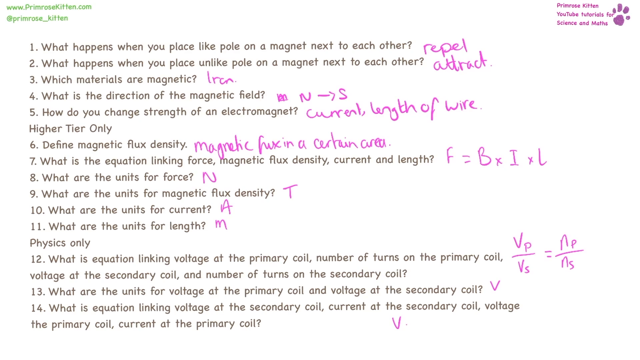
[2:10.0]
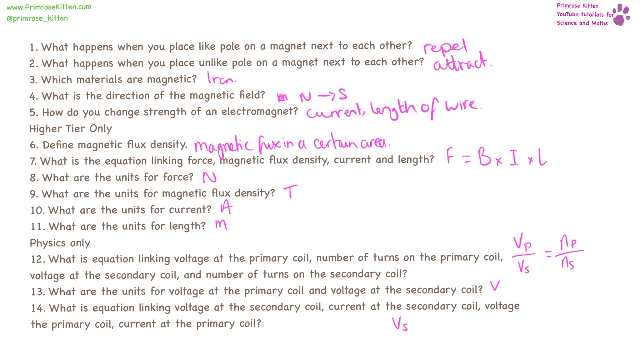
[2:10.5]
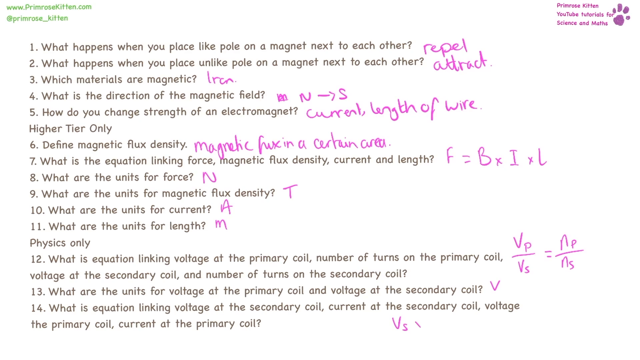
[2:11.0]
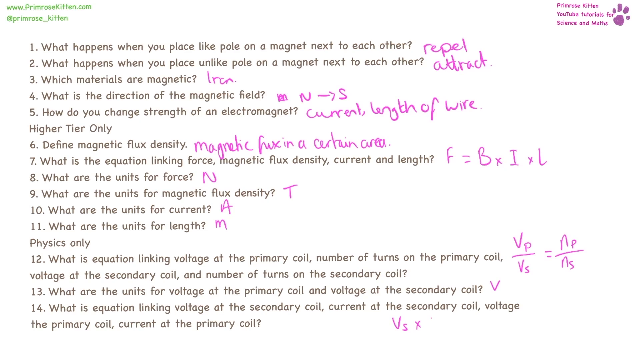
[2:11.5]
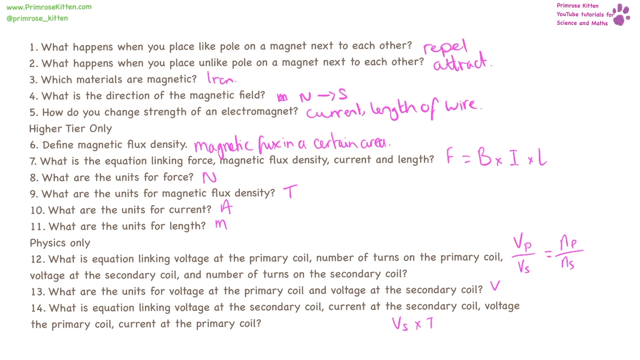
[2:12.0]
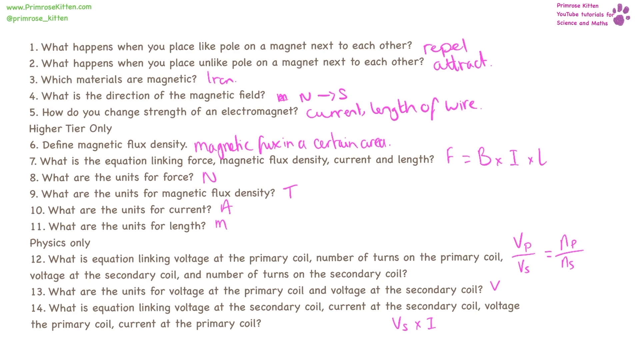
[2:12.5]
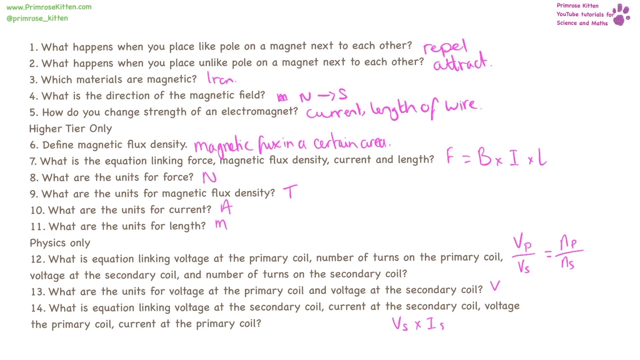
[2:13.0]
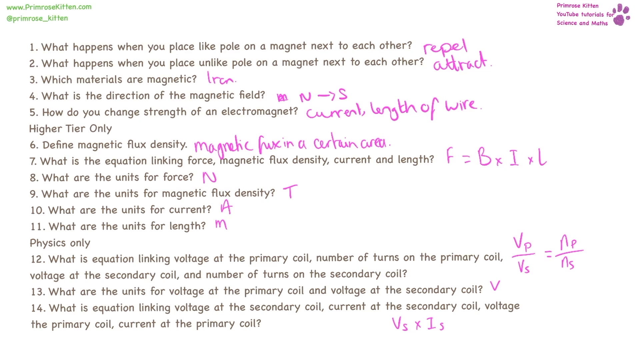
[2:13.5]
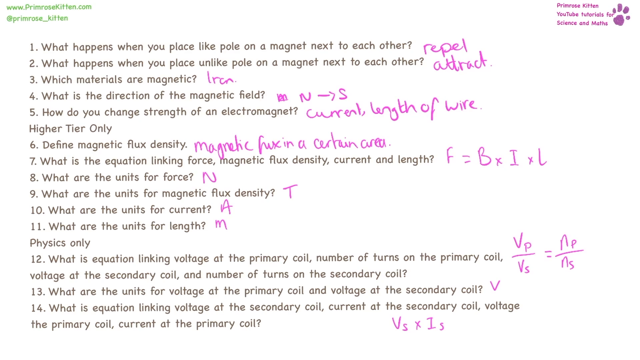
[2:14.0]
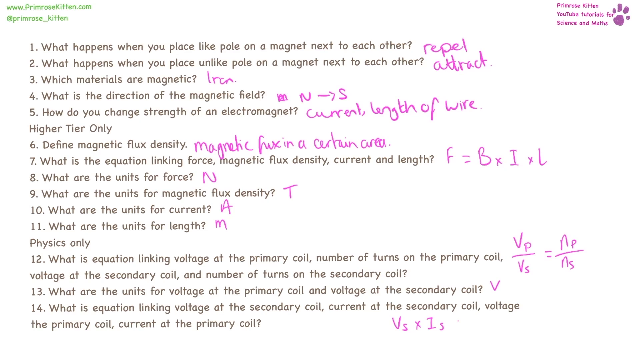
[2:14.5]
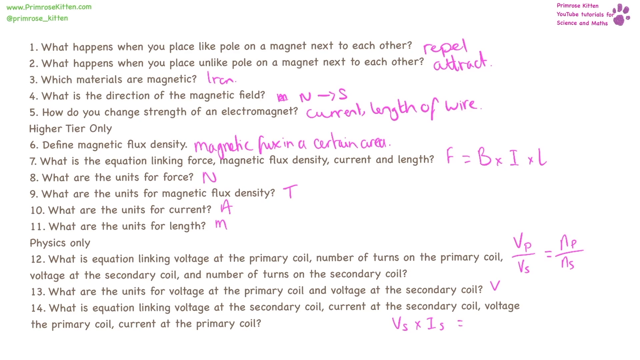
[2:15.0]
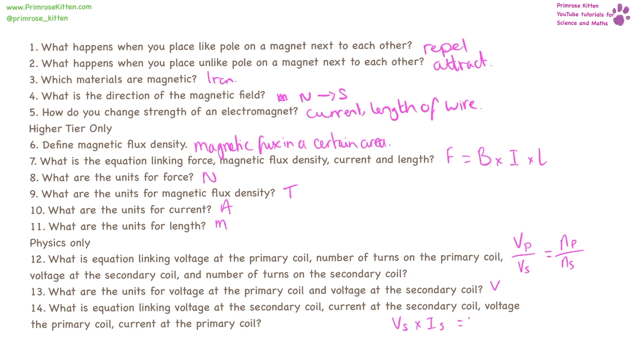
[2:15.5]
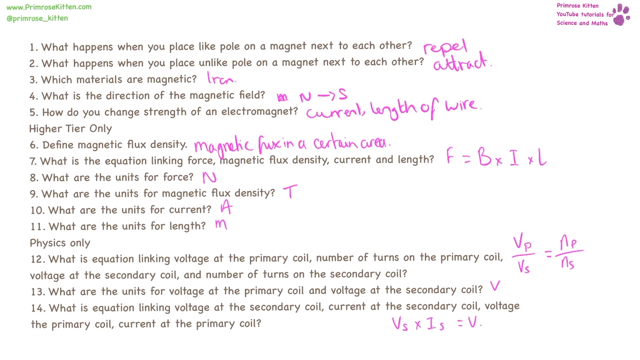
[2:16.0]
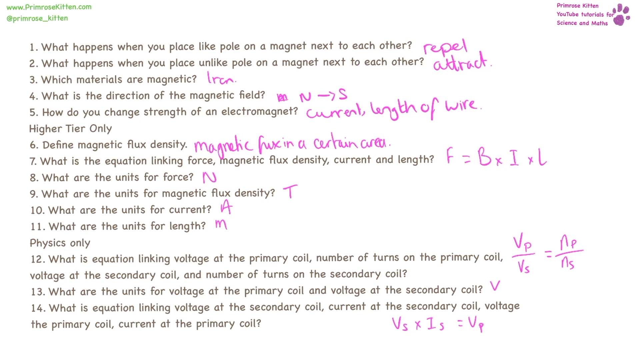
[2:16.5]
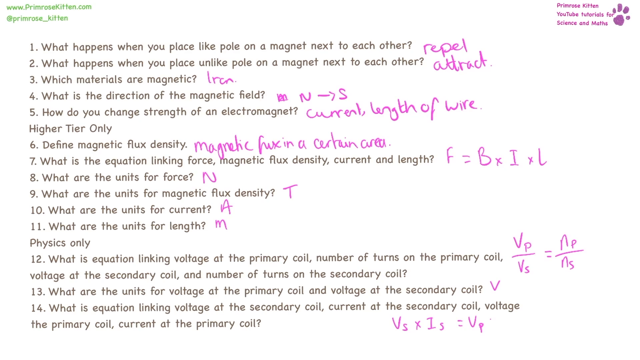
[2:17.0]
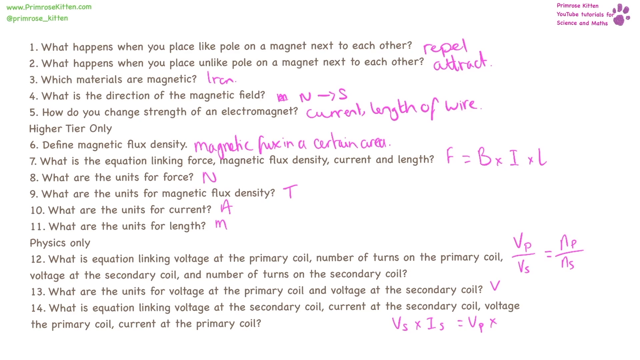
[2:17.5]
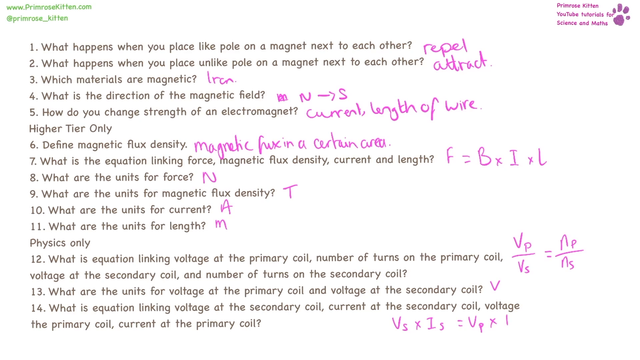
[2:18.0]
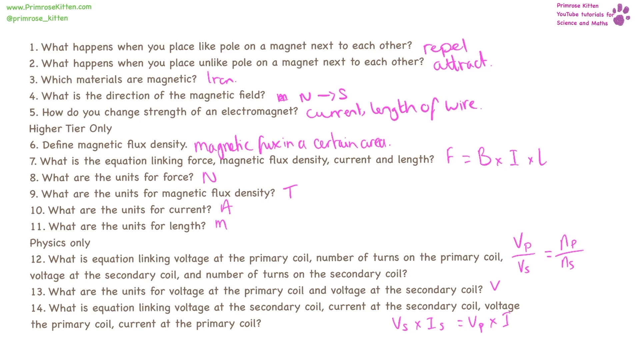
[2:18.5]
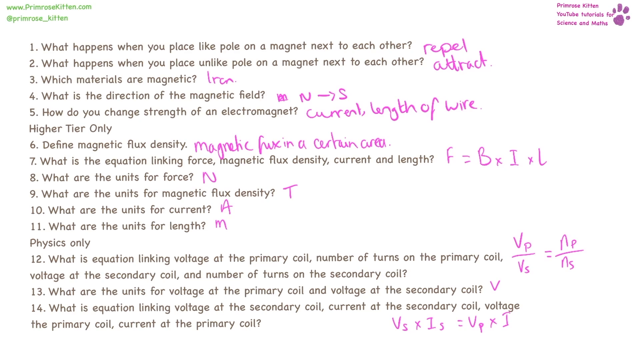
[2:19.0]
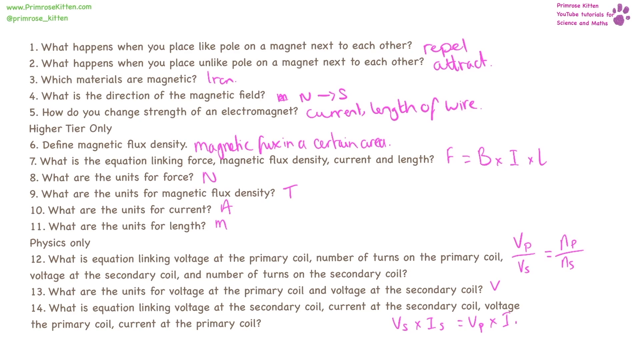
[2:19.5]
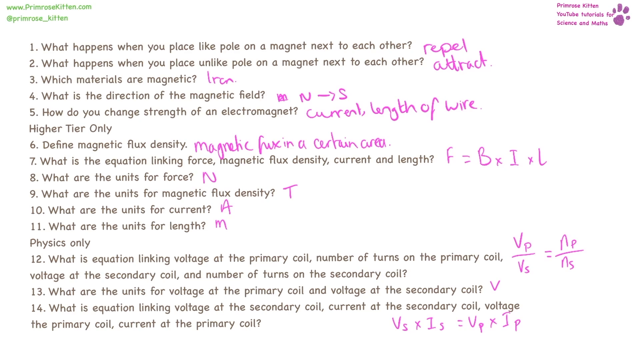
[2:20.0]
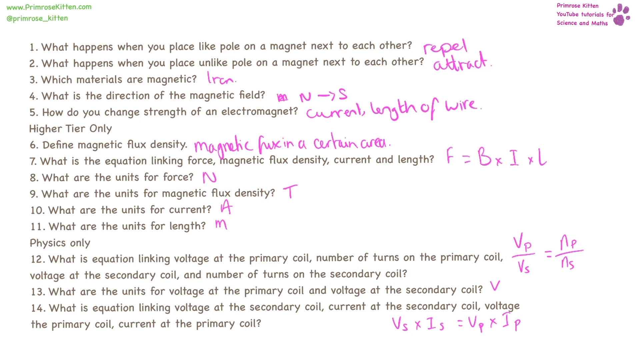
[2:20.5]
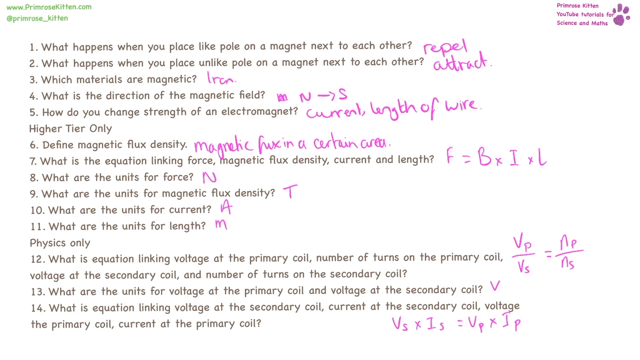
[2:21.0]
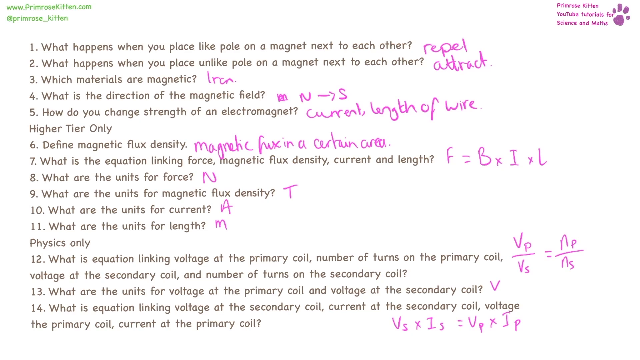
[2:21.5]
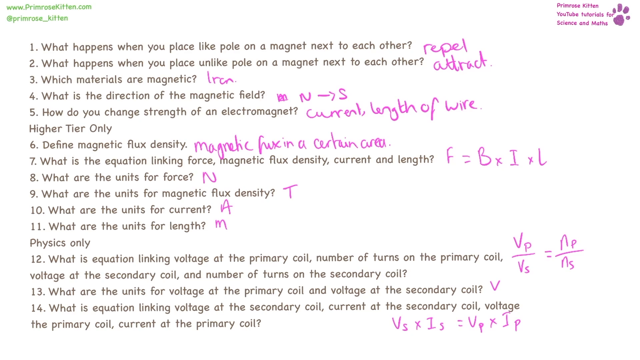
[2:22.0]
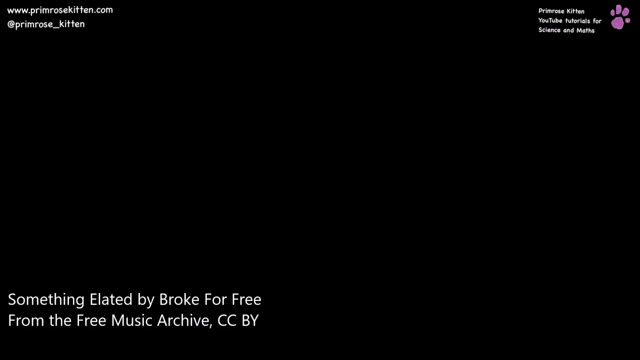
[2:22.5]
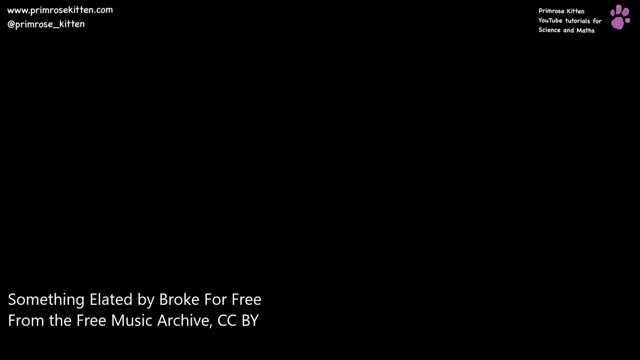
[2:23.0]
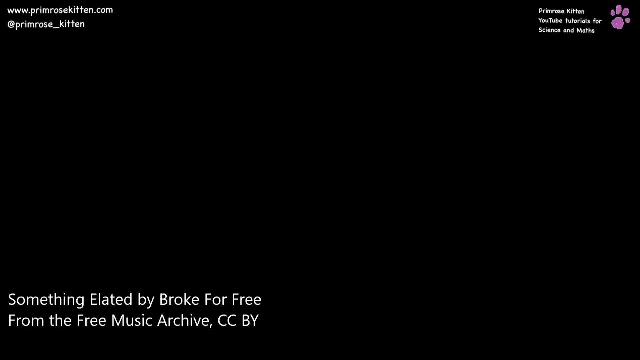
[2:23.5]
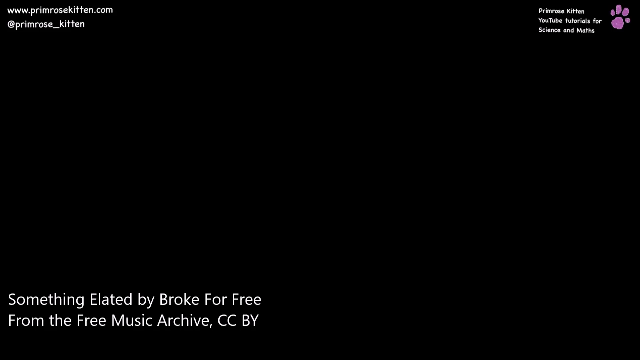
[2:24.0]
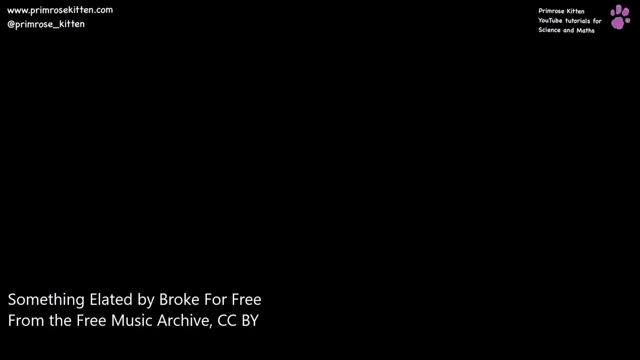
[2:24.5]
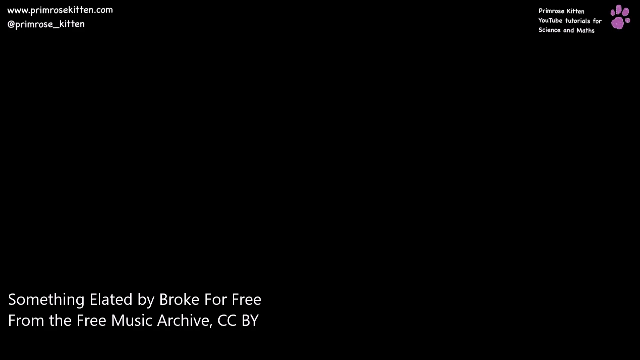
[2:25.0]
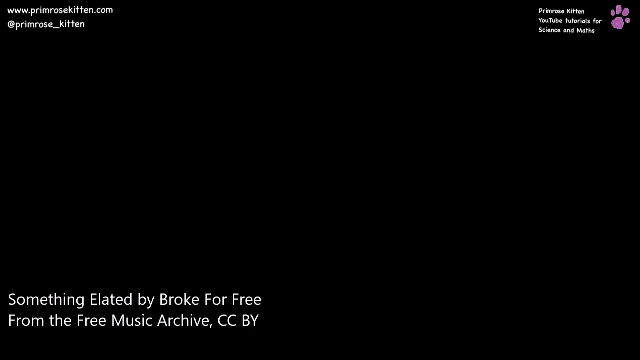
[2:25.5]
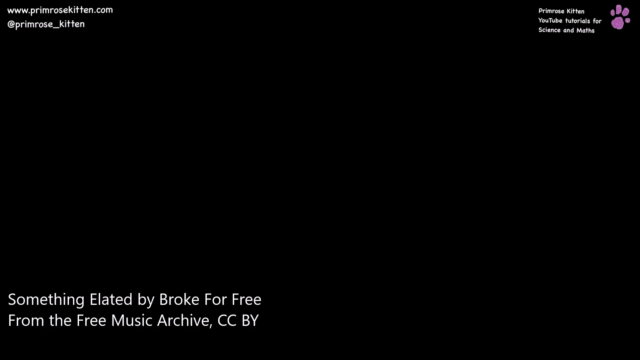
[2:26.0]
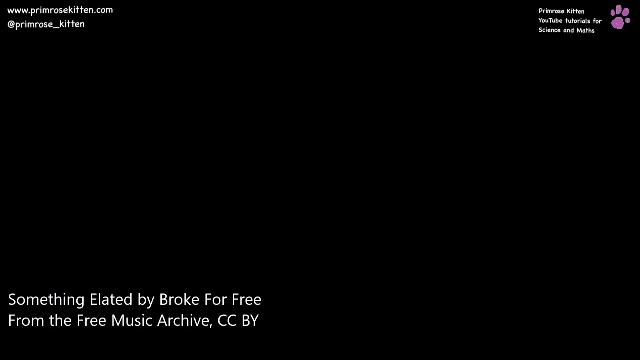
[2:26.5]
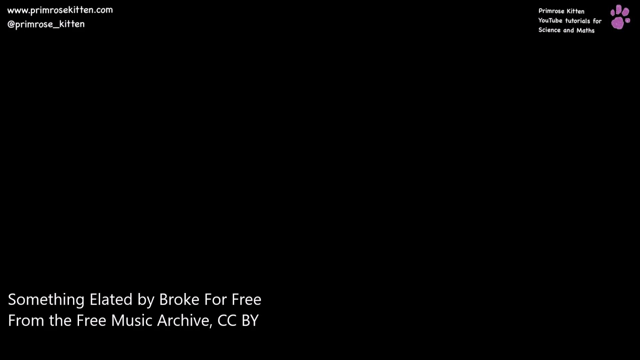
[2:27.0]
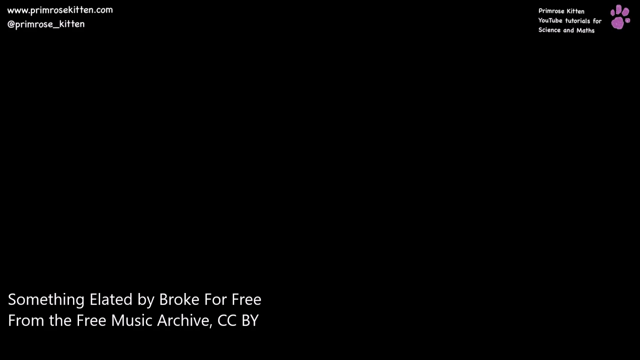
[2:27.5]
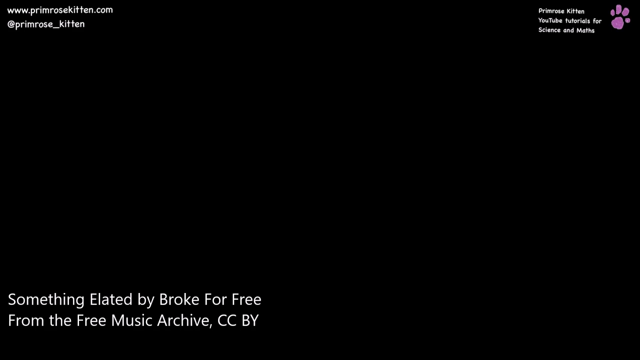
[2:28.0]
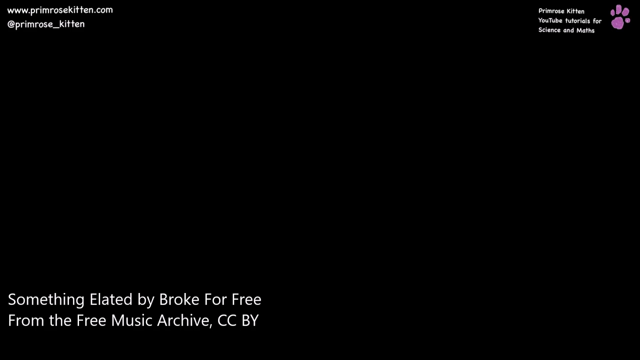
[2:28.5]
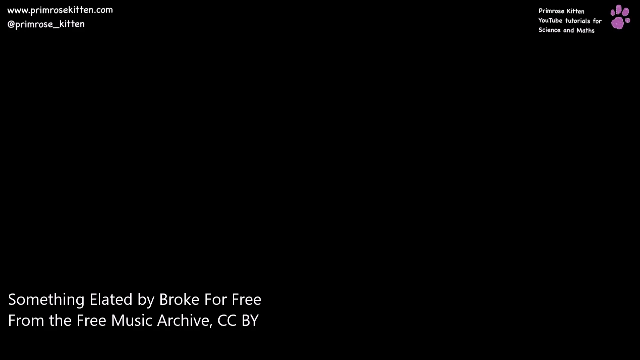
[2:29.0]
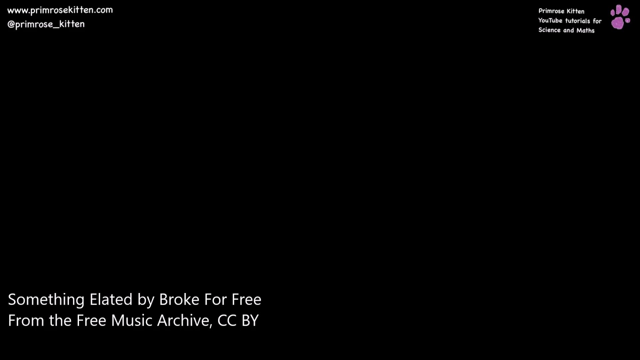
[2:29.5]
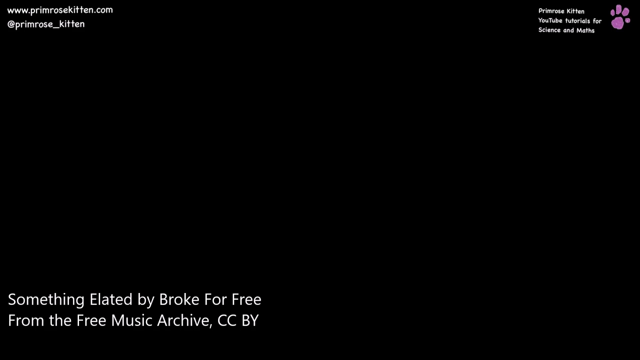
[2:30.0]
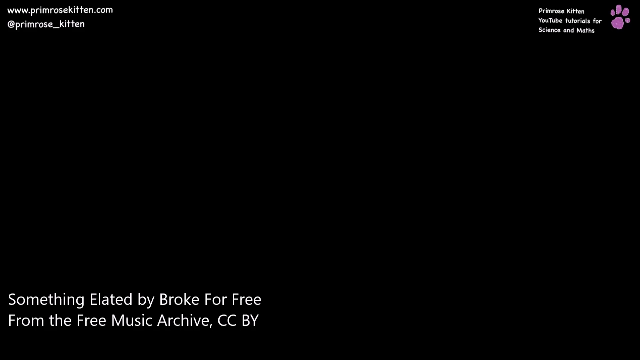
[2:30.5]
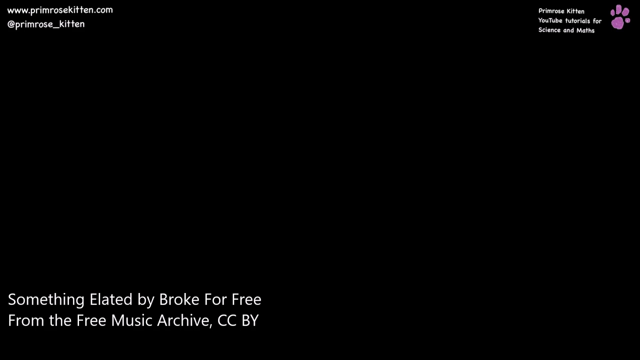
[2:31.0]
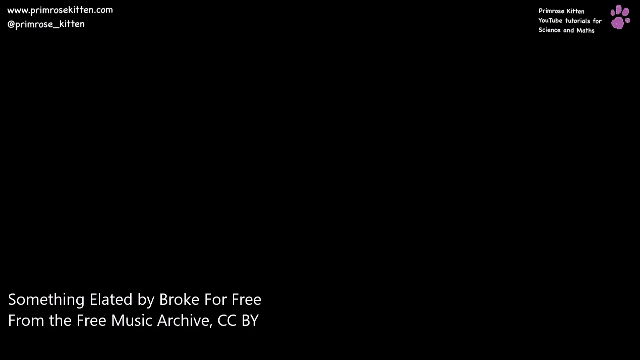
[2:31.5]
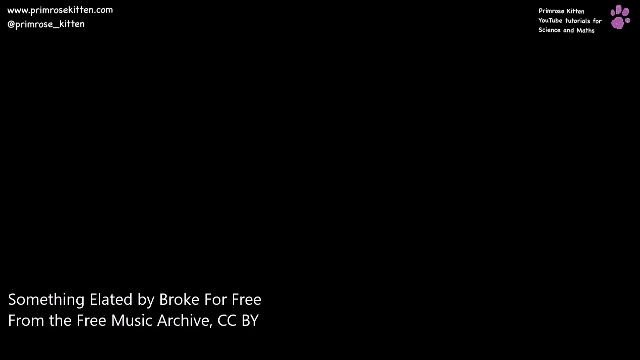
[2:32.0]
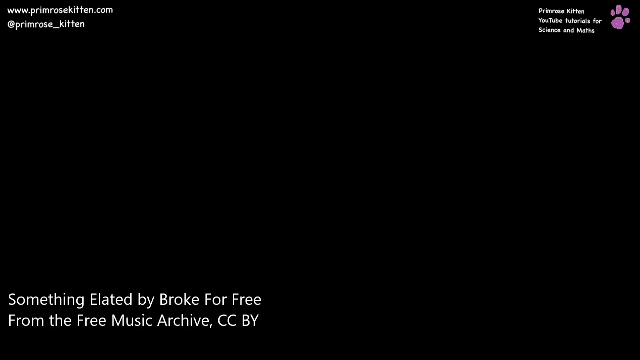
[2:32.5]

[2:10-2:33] A white screen shows 14 physics questions about magnets typed in black, each ending with a question mark; questions 12 and 14 are two lines long and the rest are one line. The top left corner has Primrose Kitten's website name and Instagram handle, one below the other, and the top right corner has the YouTube channel name and paw logo, with the questions below. Questions 6 to 11 are labeled "high tier only" and 12 to 14 "physics only". Answers to 13 questions are already complete, written after each question mark in red pen with freehand thin strokes. The answer to question 14 is written as "Vs*Is = Vp*Ip". The screen then transitions to black, with the website name, Instagram handle and logo still present, now in white.